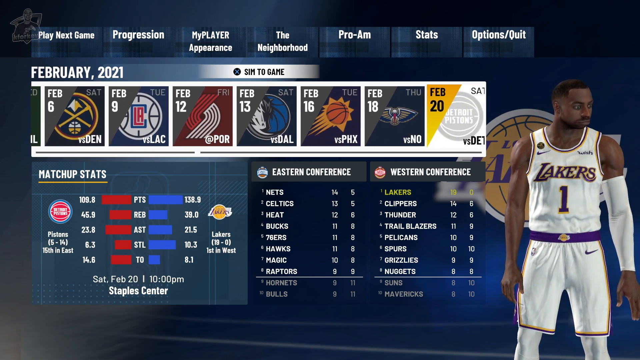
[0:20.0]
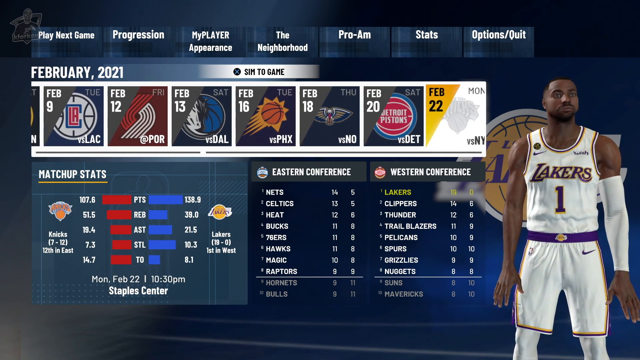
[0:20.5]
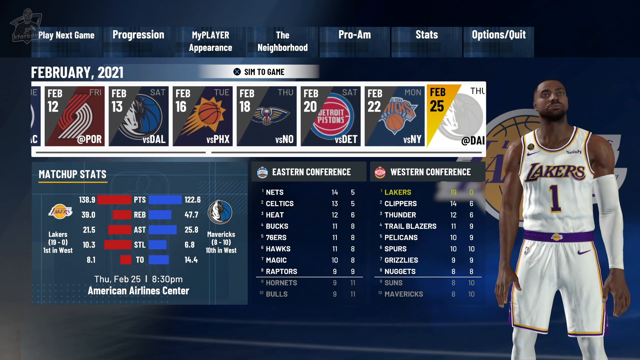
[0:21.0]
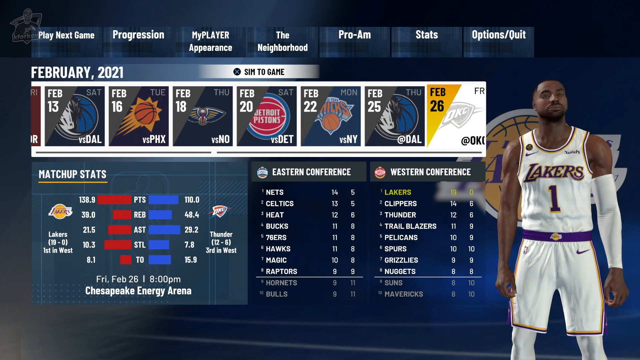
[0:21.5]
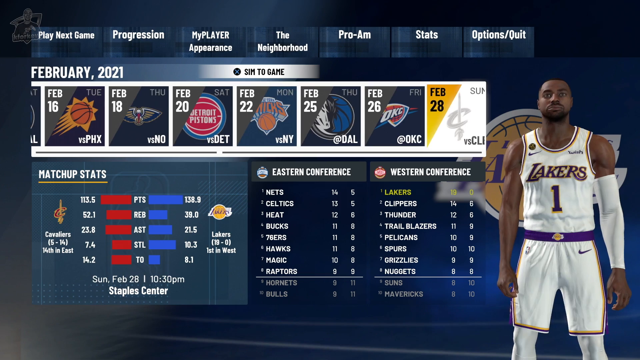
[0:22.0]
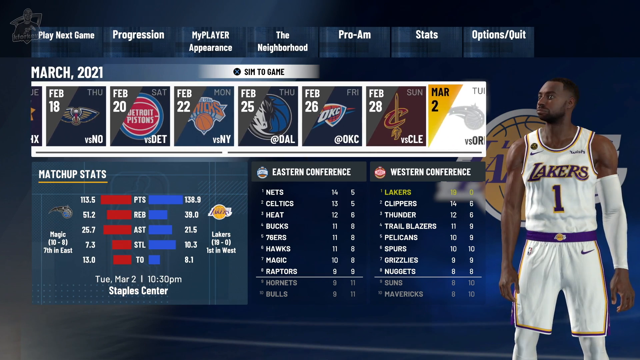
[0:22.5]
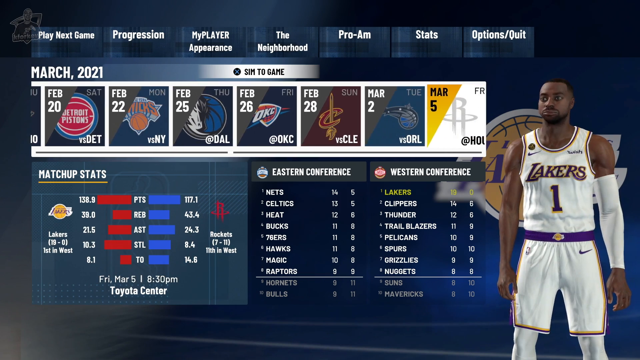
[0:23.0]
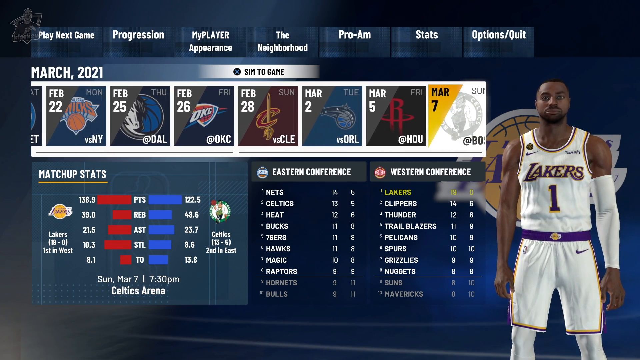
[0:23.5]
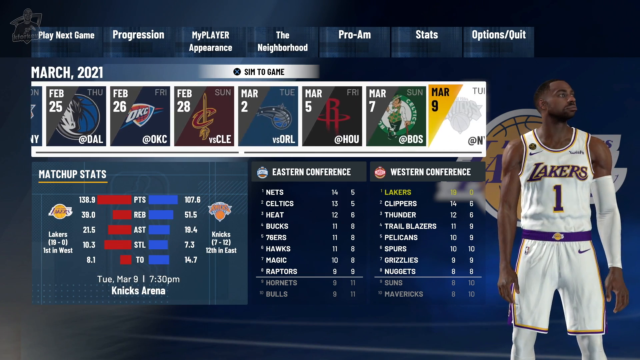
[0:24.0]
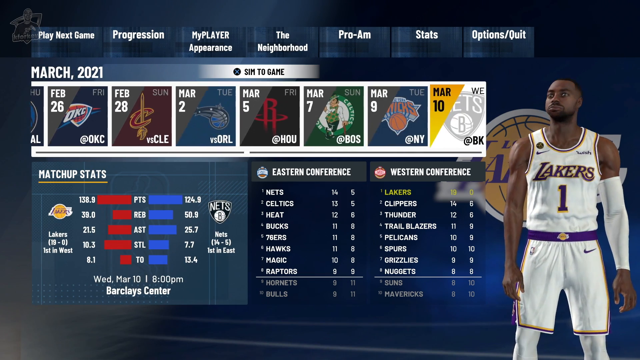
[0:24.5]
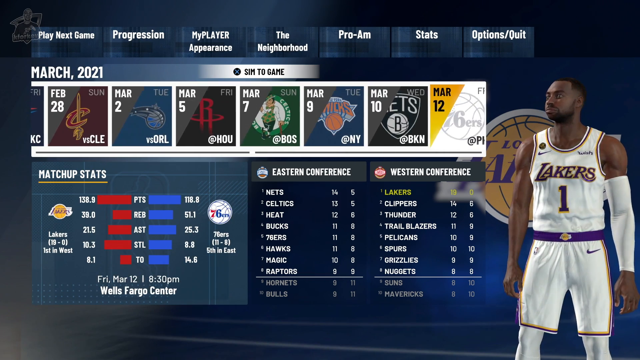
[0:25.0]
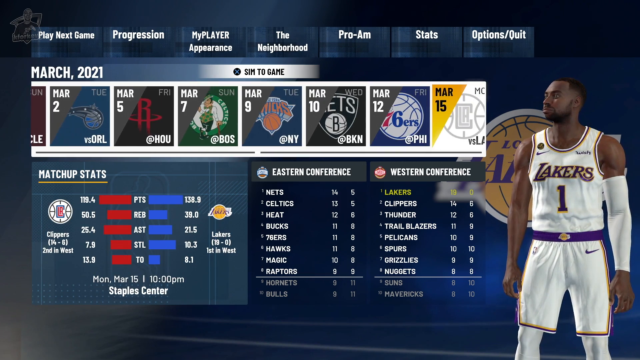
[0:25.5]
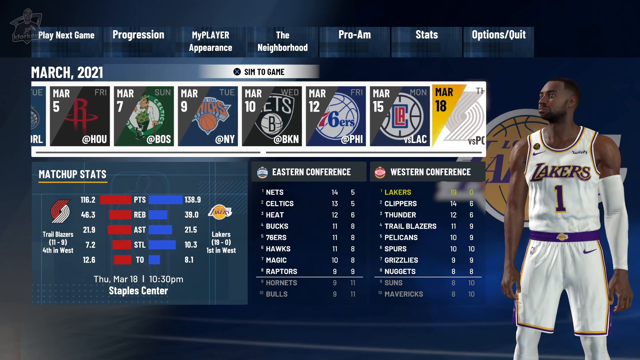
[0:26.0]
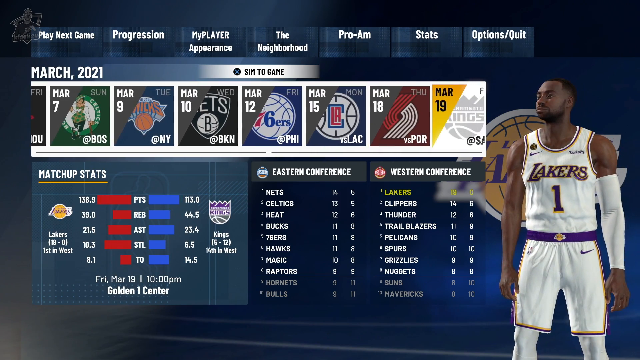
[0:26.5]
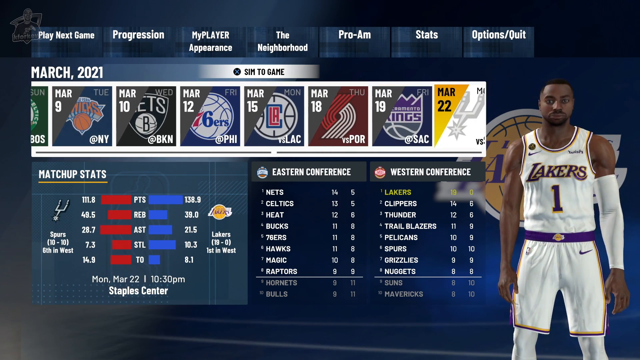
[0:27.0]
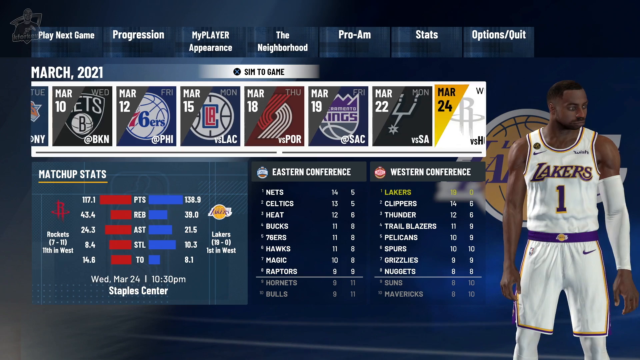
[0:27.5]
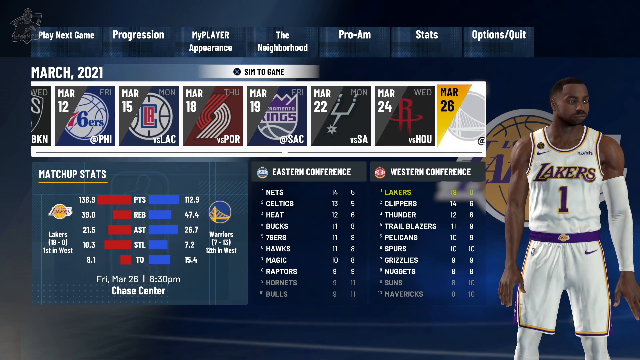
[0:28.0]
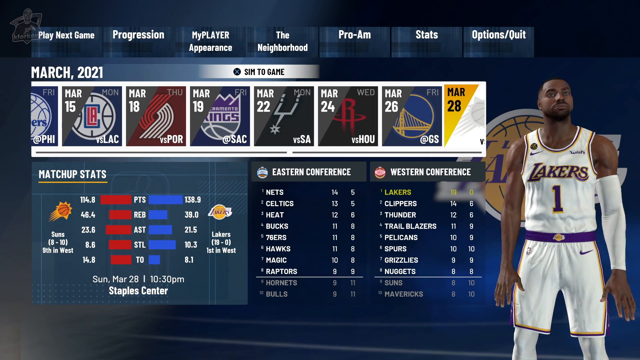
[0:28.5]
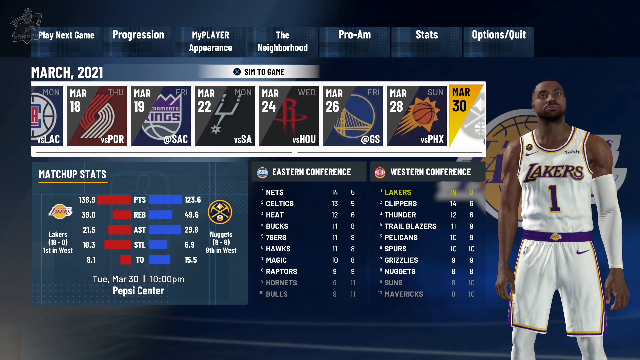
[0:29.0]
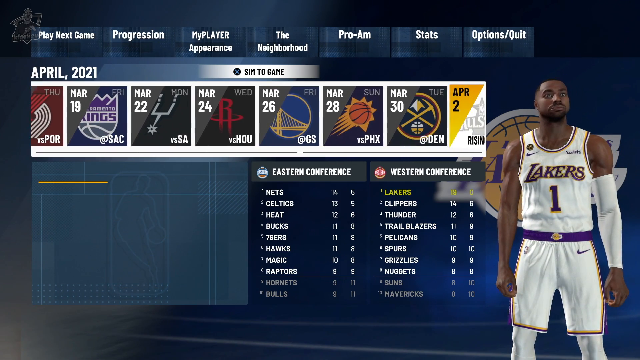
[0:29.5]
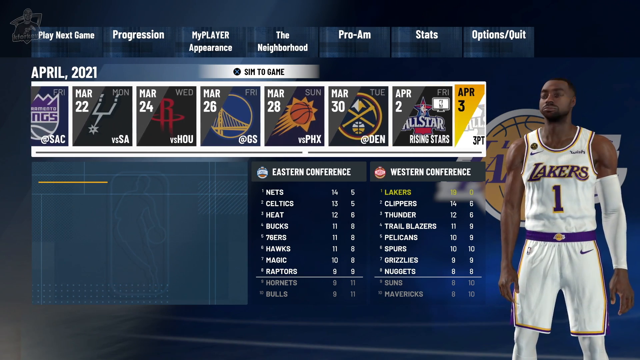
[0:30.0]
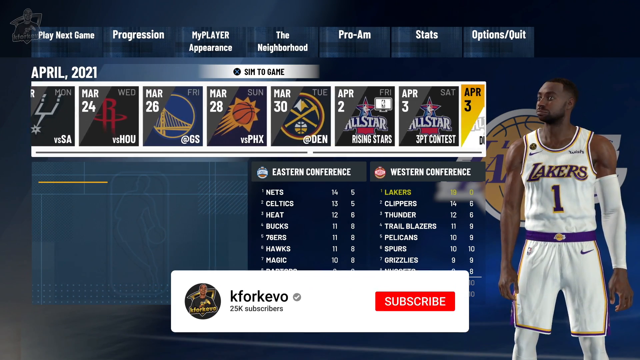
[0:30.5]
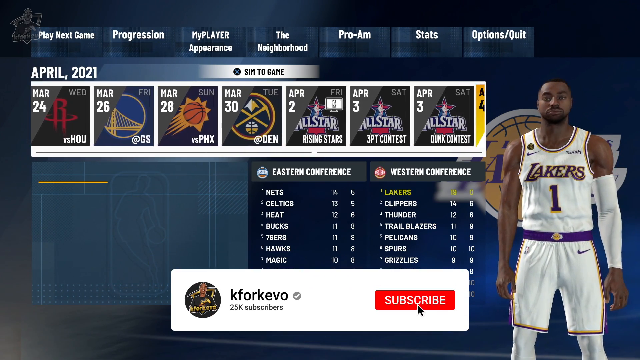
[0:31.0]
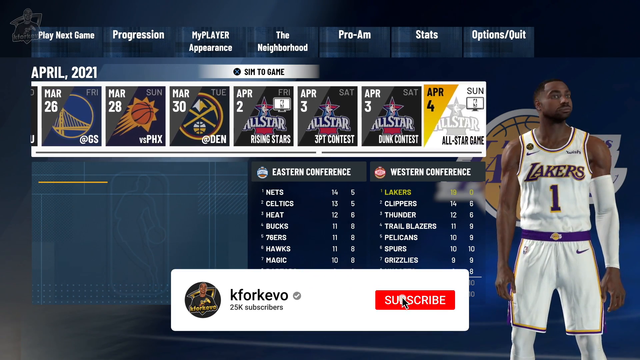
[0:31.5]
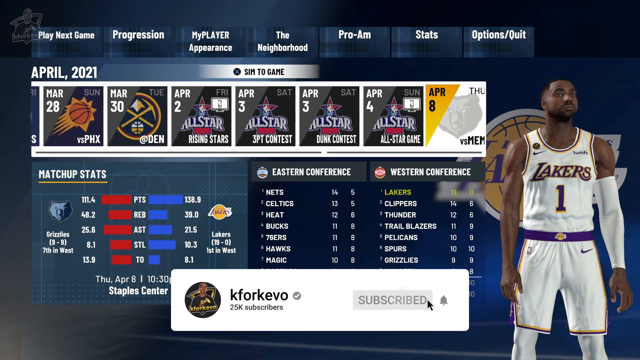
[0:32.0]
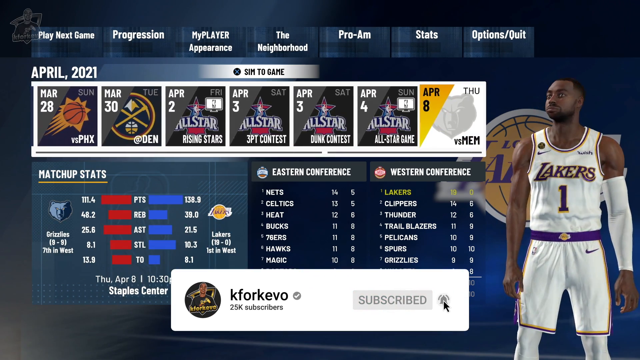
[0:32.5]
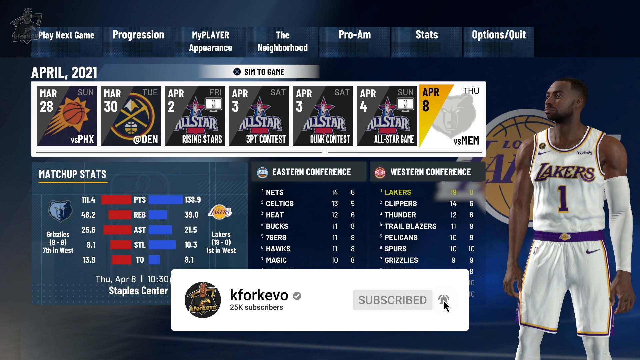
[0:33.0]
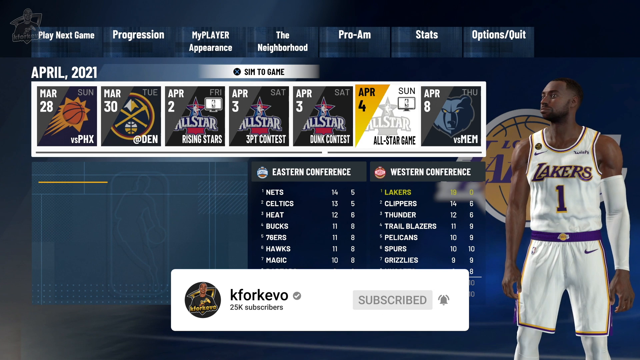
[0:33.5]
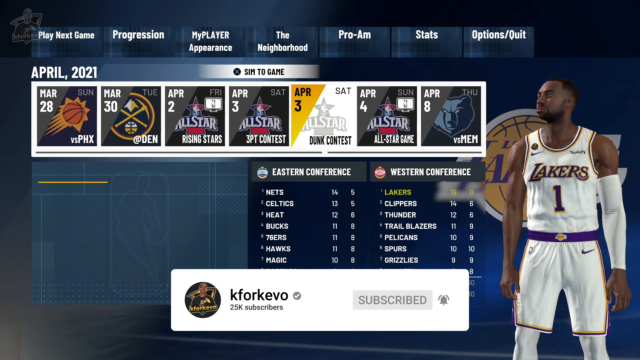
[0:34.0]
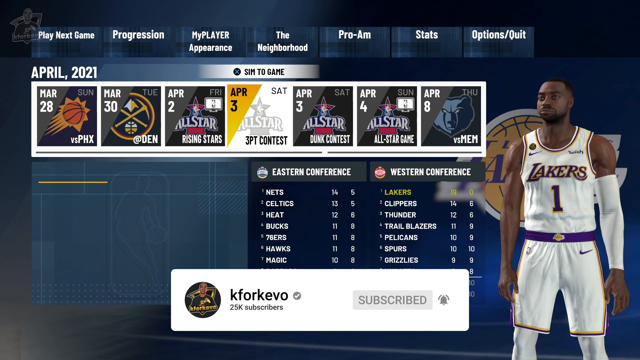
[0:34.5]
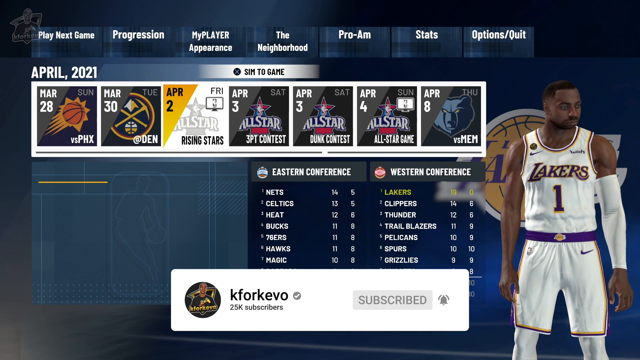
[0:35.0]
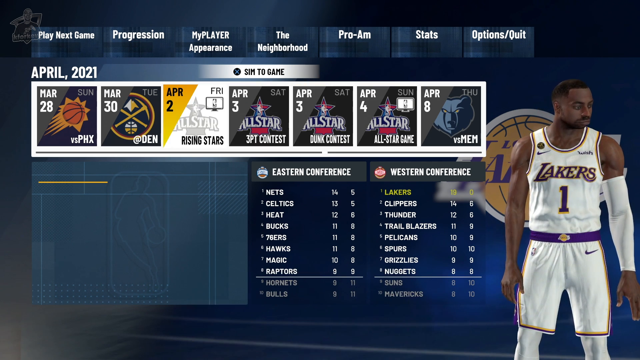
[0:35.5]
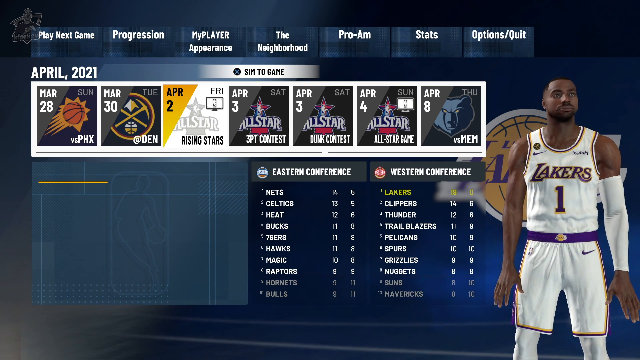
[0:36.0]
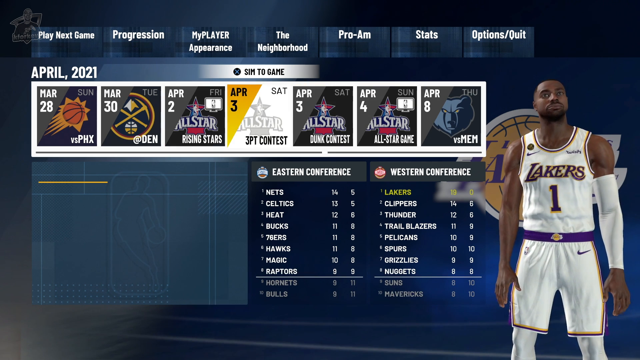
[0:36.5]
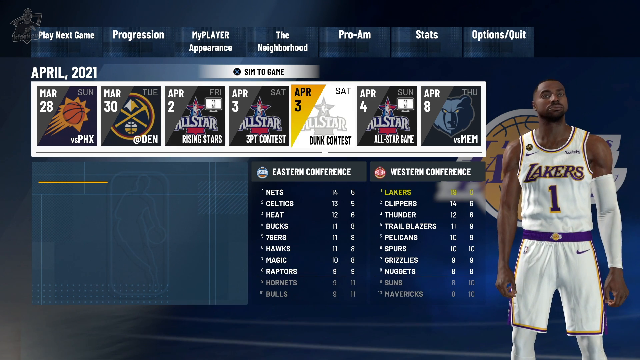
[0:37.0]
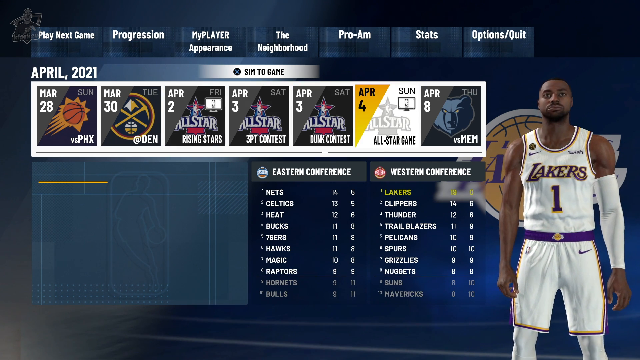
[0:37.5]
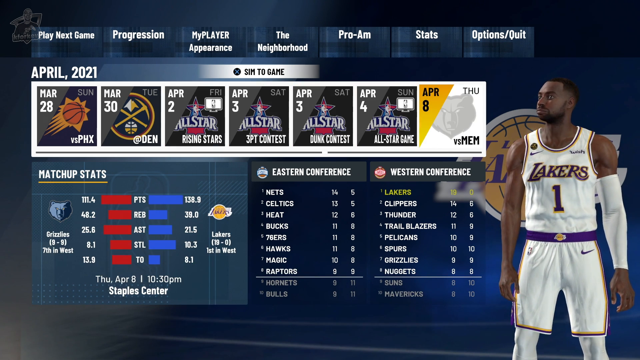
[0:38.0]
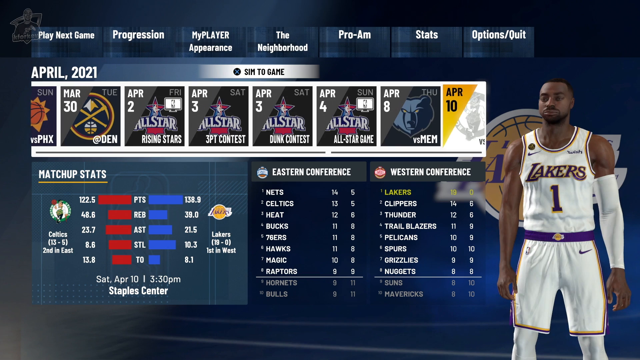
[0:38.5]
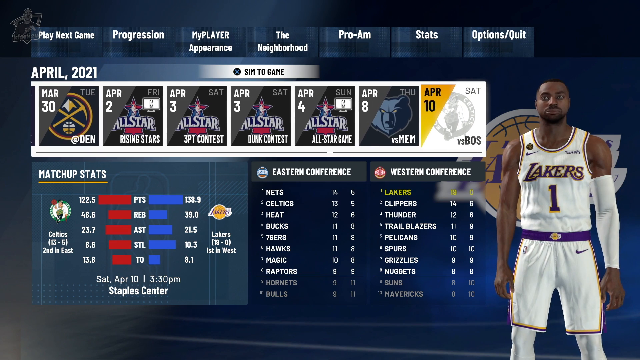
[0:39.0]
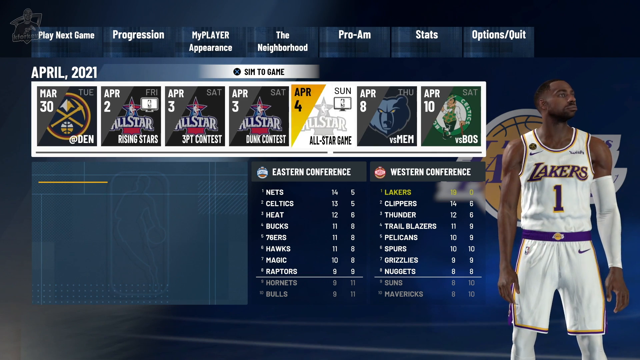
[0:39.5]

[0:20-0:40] The video appears to scroll through the menu of an NBA game. Headers or buttons across the top read, in white text, "Play Next Game", "Progression", "My Player Appearance", "The Neighborhood", "Pro-Am", "Stats" and "Options/Quit". In the middle of the menu there appear to be dates in squares, each with a team logo inside, probably the next opponent on that date. At first the squares read February 6th, then February 9th to the right, then February 12th, February 13th, February 16th, February 18th and February 20th. The bottom right of each square names the opponent, reading something like "versus Denver", "versus LA Clippers", "versus Portland", "versus Dallas" and "versus Phoenix". The bottom of the screen appears to hold matchup stats and Eastern and Western Conference standings. On the right side is a picture of the player avatar, apparently a black man with short white hair wearing a white uniform with "Lakers" across it in purple and the number one. The middle banner of squares, dates and team icons is scrolled to the right from February into March, reaching March 26th, March 28th, March 30th, then April 2nd, April 3rd and April 4th. A white banner suddenly appears at the bottom of the screen, apparently a YouTube banner for the channel "K4Keeble", with what looks like an icon showing a black kid on the left and "25k subscribers" underneath the channel name. On the right side of the banner is a "subscribe" button with a gray bell next to it. The banner then goes back down, and scrolling through the game menu continues.